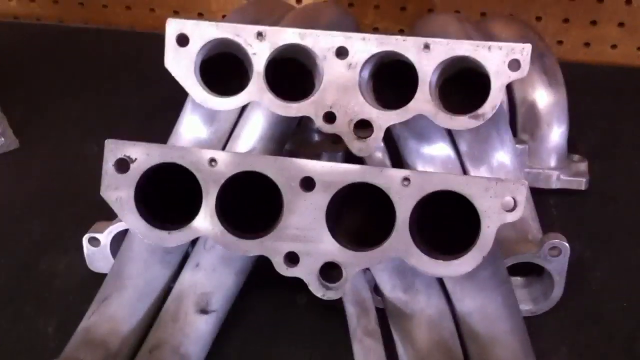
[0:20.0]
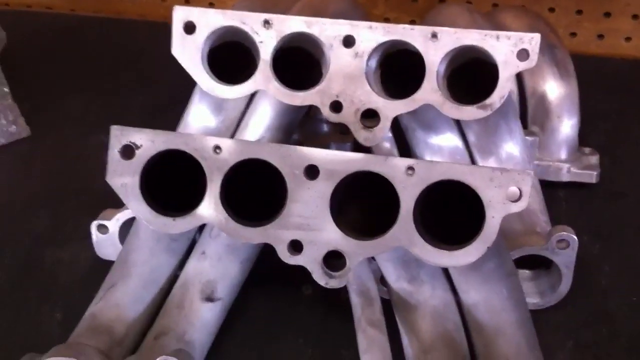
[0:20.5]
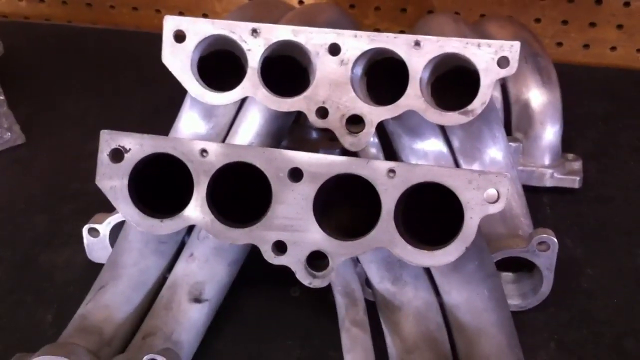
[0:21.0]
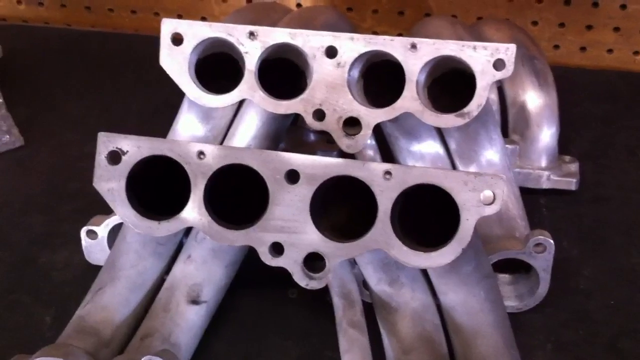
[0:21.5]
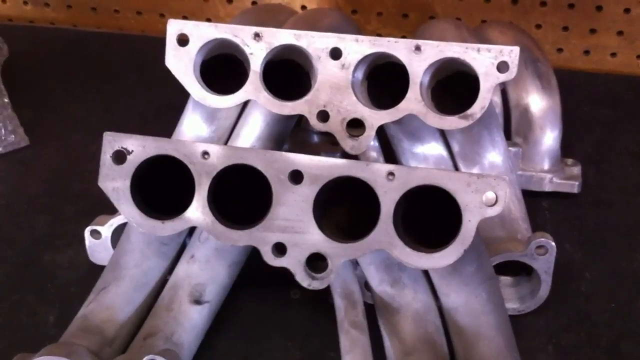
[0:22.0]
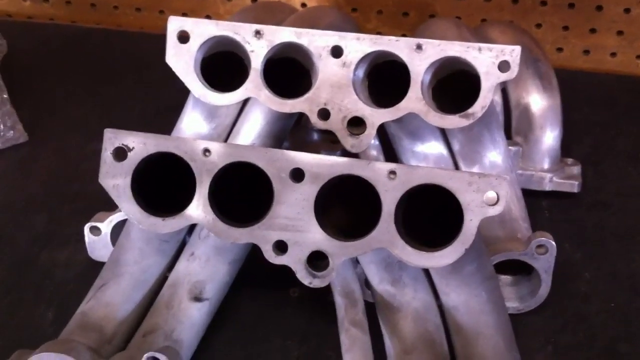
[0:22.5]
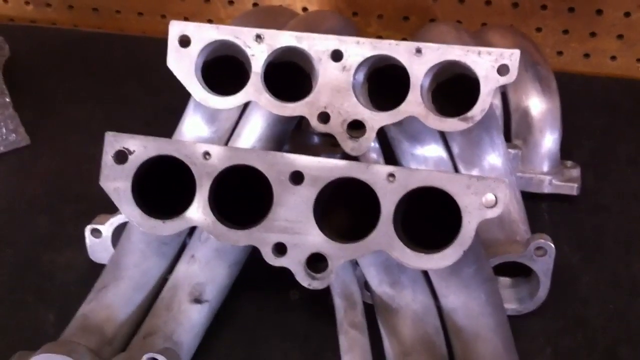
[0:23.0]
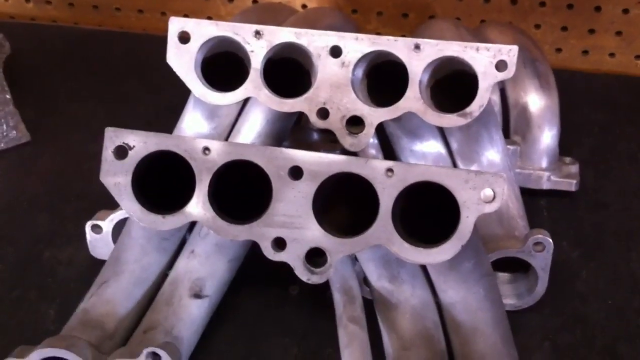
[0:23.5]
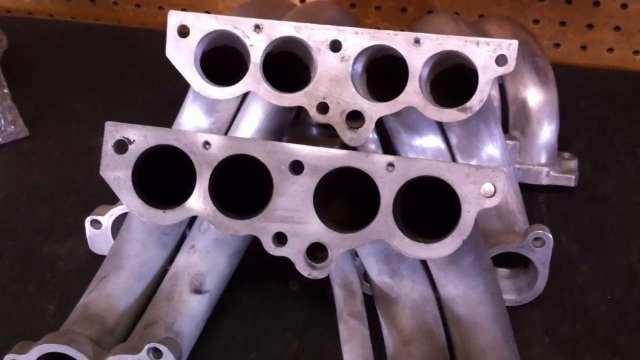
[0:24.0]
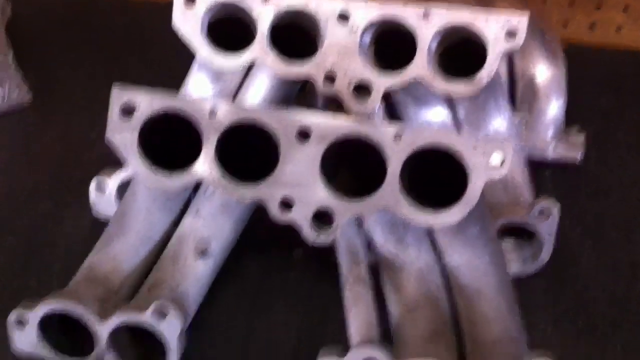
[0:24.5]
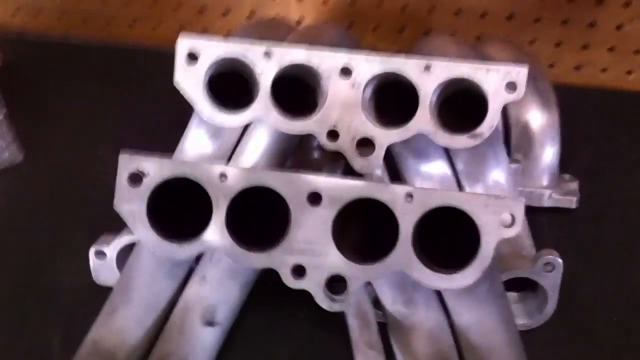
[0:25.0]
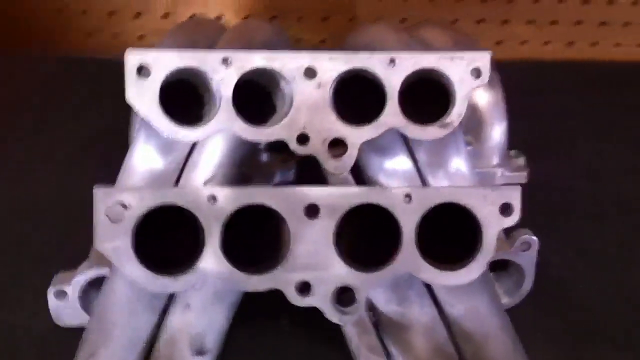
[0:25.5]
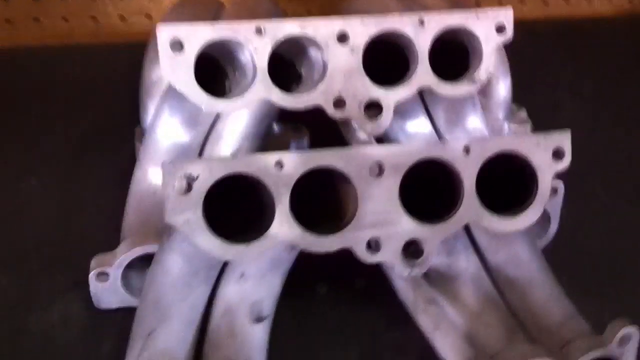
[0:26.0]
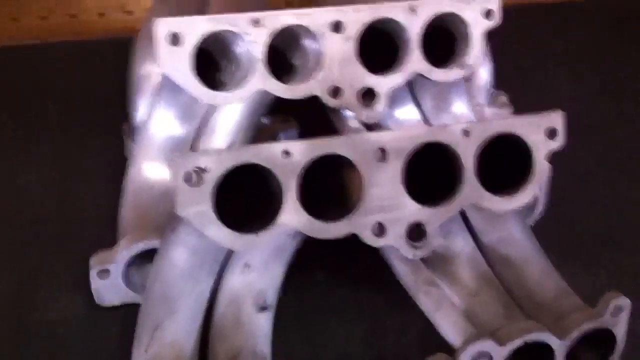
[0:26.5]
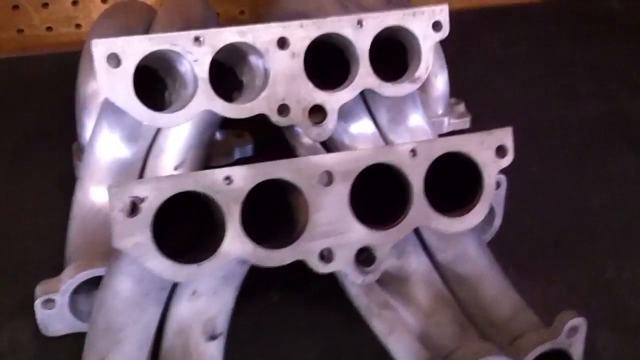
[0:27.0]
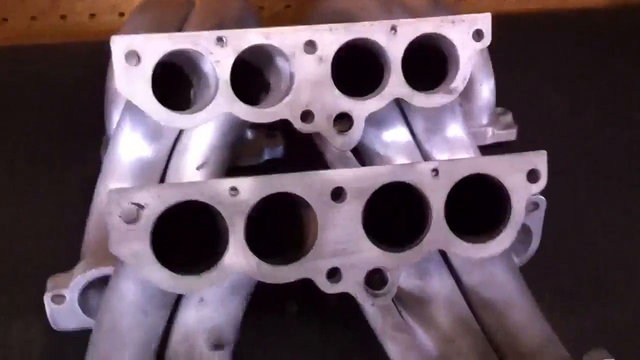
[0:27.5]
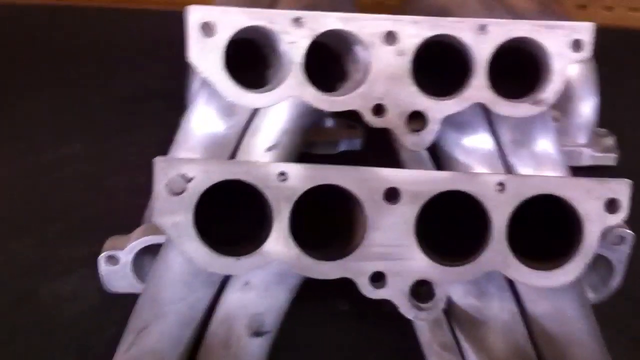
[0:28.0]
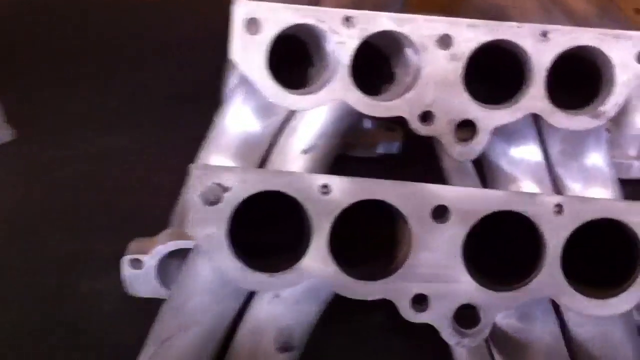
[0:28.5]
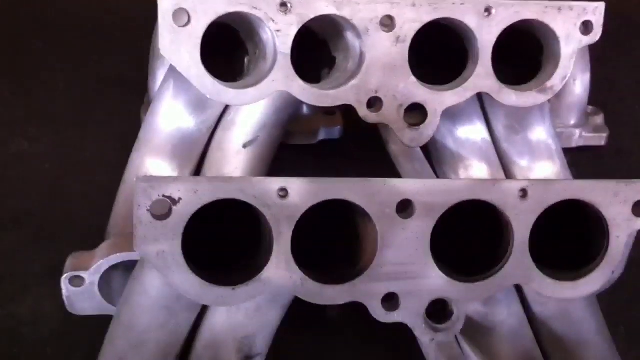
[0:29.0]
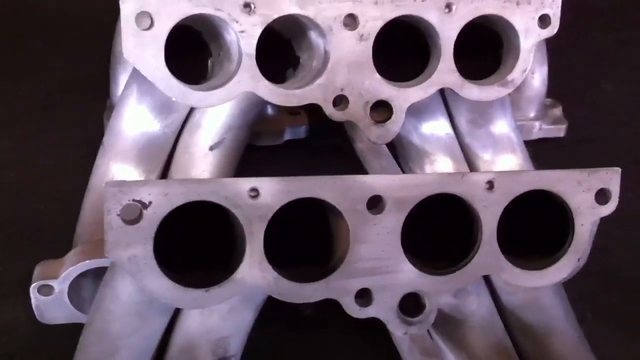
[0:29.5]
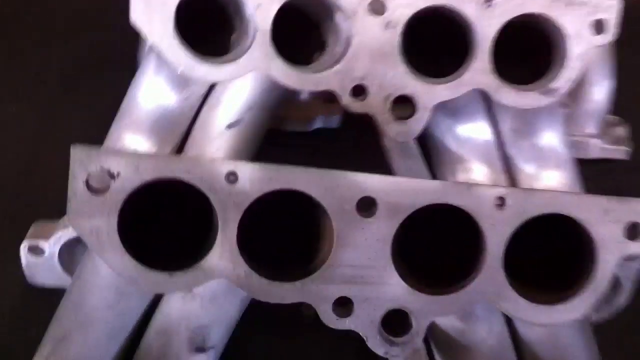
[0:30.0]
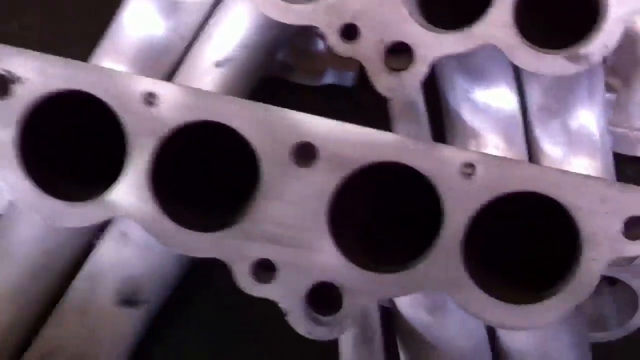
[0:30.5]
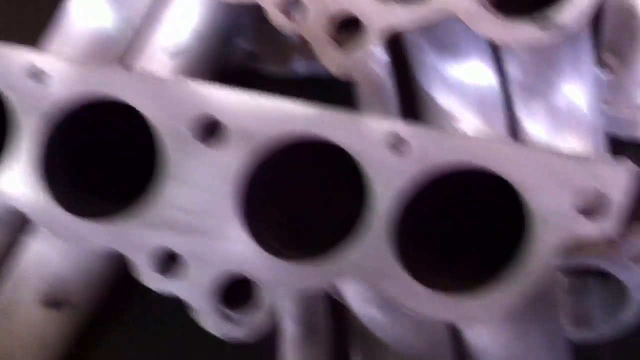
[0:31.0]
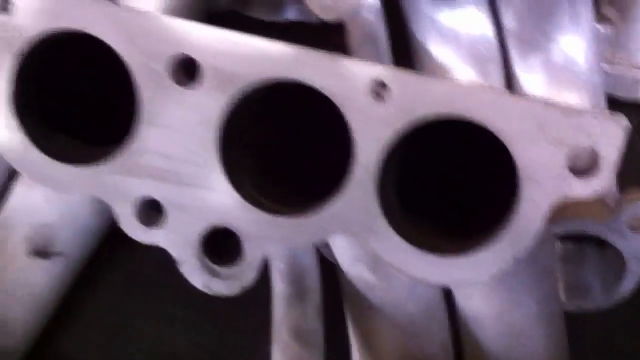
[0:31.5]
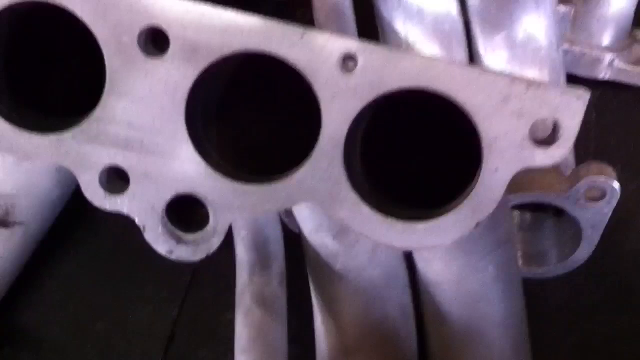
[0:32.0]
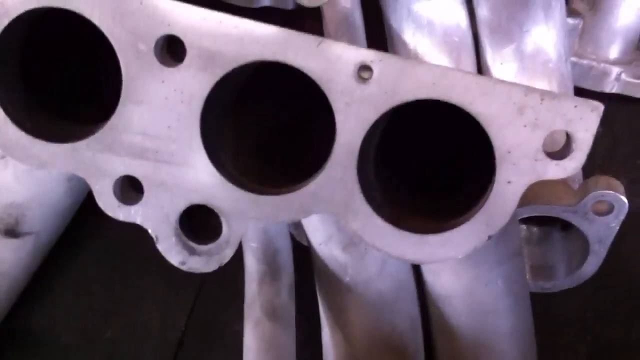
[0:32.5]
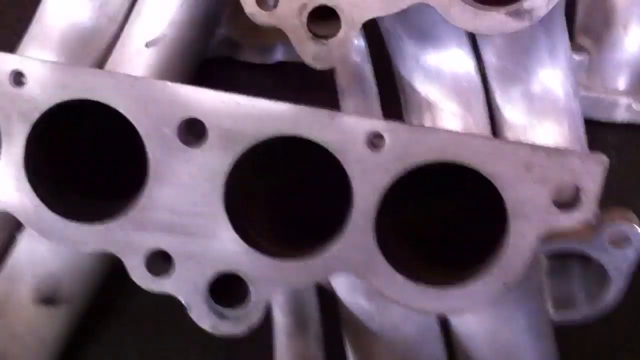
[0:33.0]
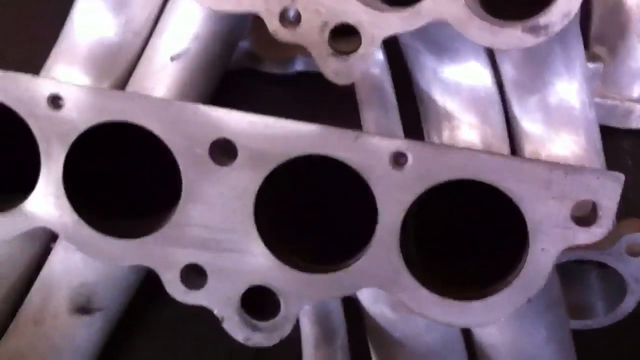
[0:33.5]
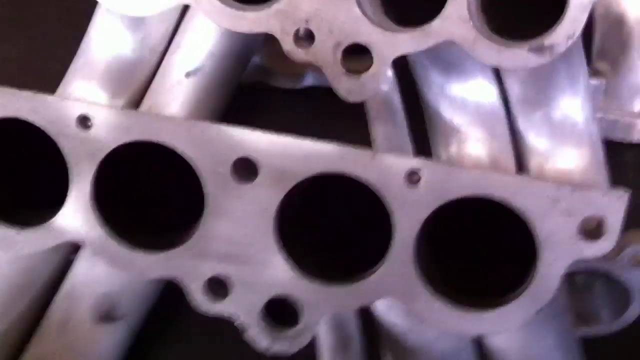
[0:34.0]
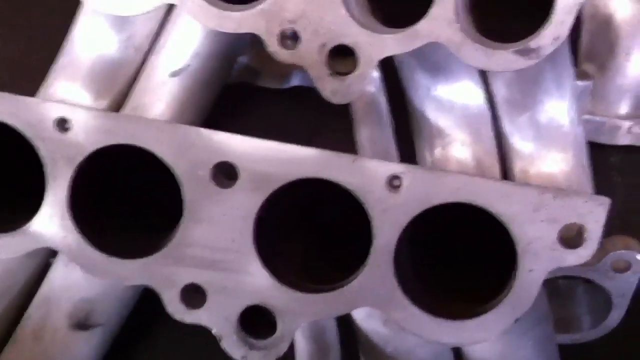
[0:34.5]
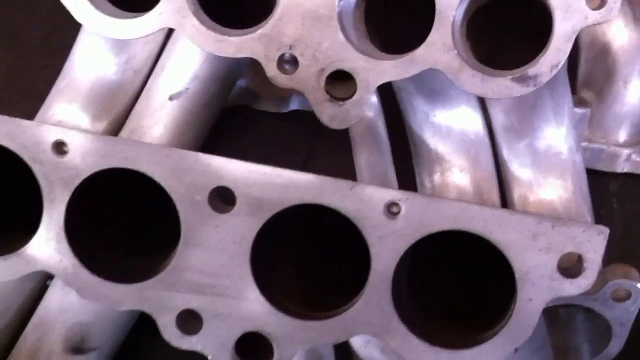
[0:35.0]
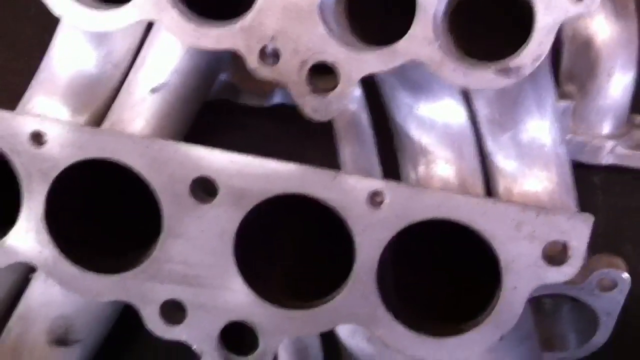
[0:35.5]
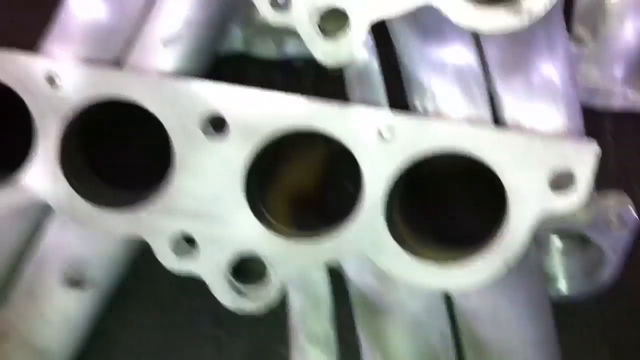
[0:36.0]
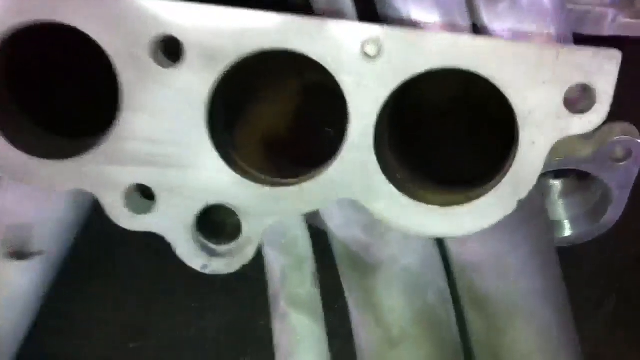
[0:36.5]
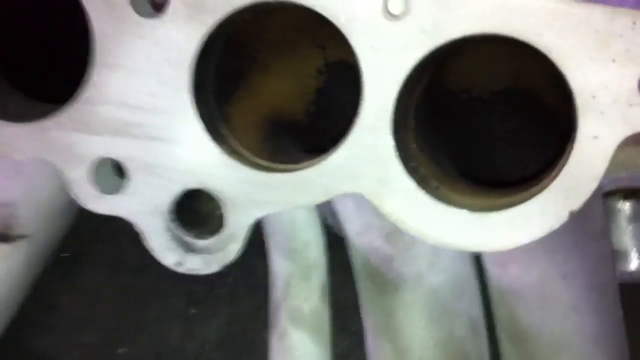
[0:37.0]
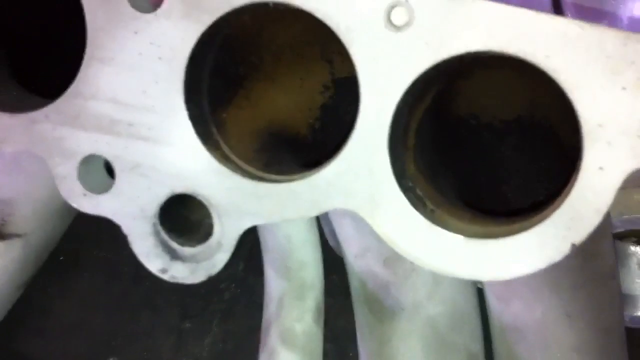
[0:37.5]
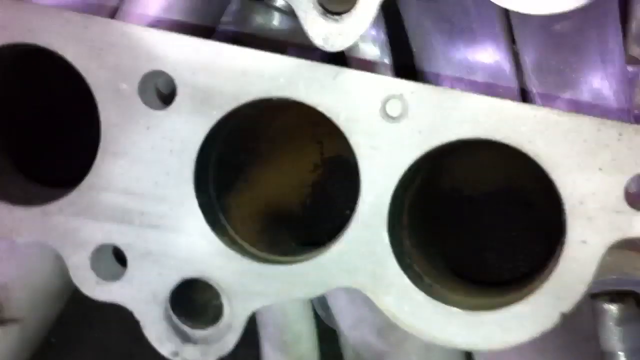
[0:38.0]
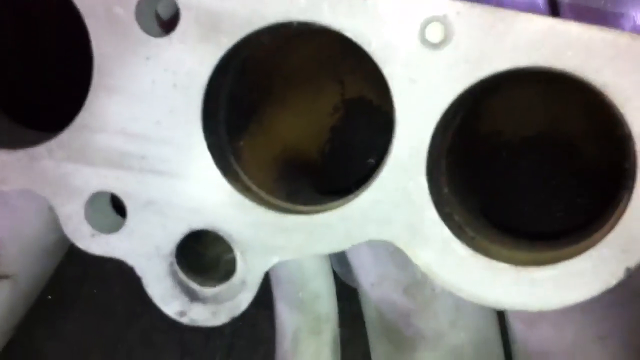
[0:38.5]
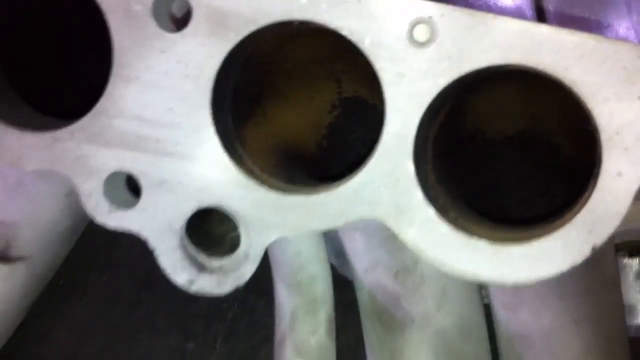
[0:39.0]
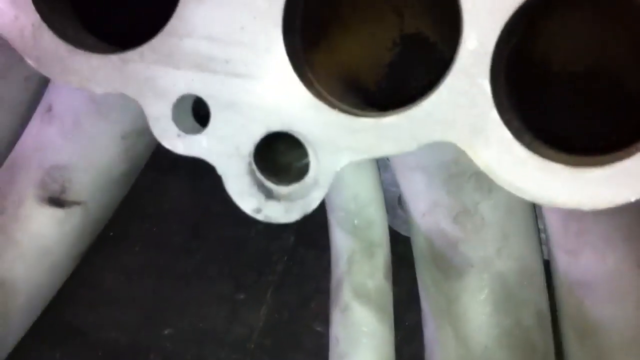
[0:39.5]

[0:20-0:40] Metal pipes are connected by a metal plate that goes across them, with four large holes in line with the openings of the pipes. Suddenly a light shines on the pipes, making them easier to see. There are two sets, and behind them is what looks like a brown pegboard with little holes; it is not touching the pipes. The pipes rest on a dark surface. Little clamps are on the sides of the pipes, possibly so they can be secured to something. Aside from the big holes, the plate has smaller holes. To the left of the metal pipes is an object of which only a corner is shown.